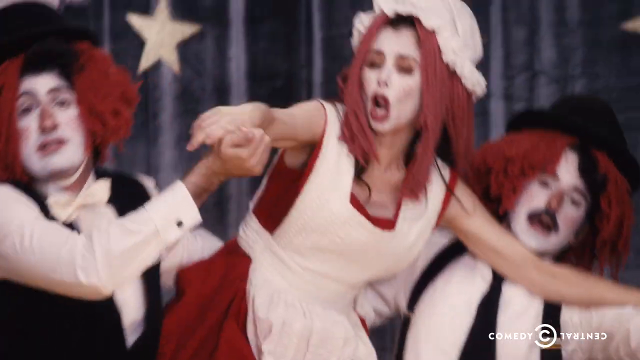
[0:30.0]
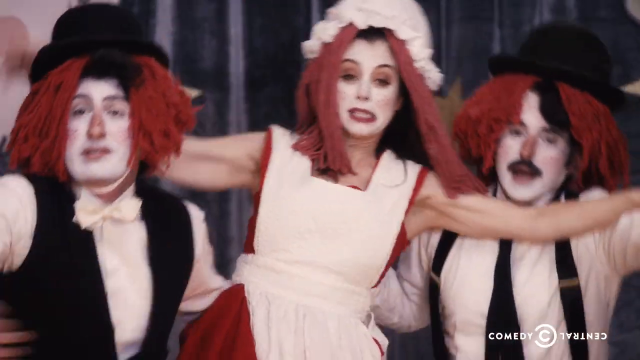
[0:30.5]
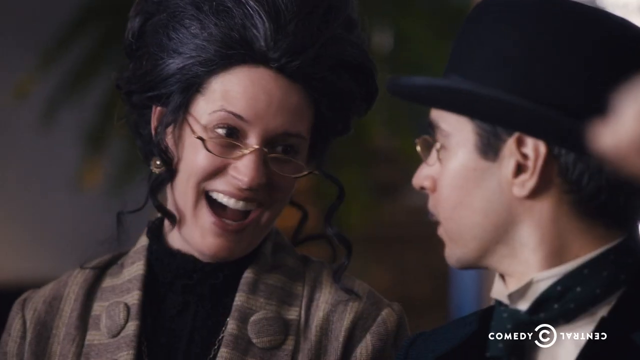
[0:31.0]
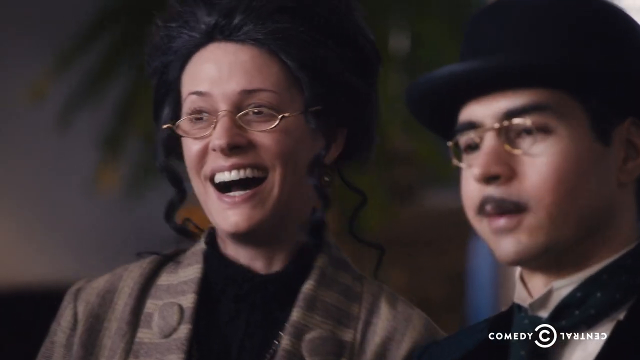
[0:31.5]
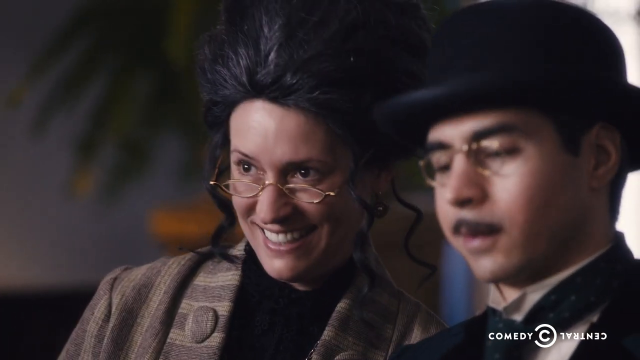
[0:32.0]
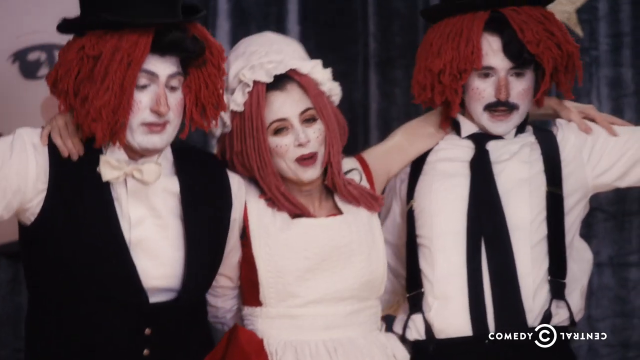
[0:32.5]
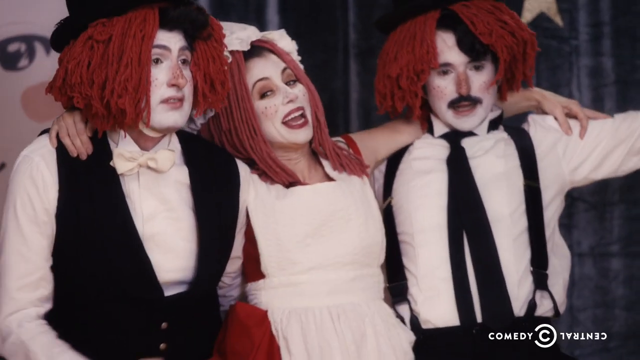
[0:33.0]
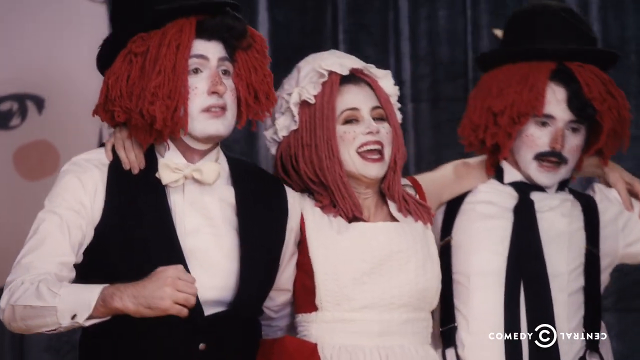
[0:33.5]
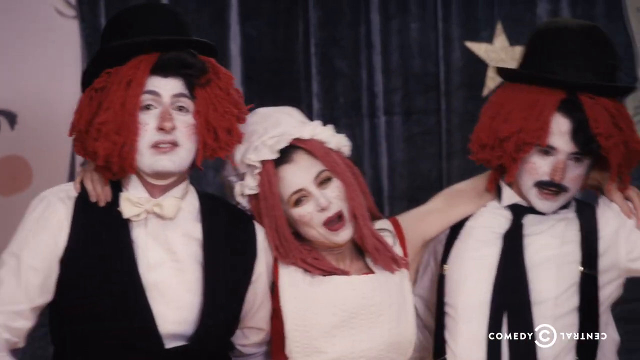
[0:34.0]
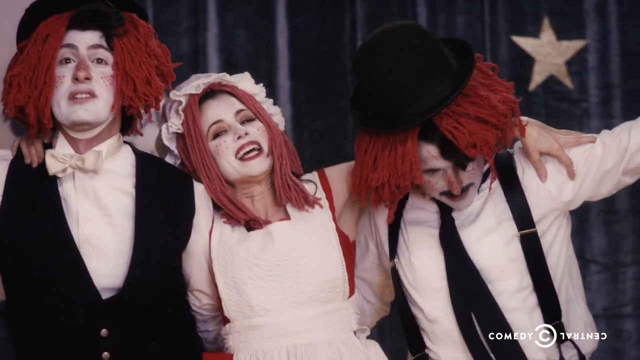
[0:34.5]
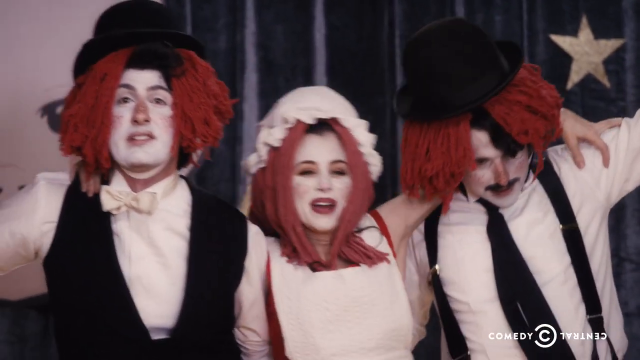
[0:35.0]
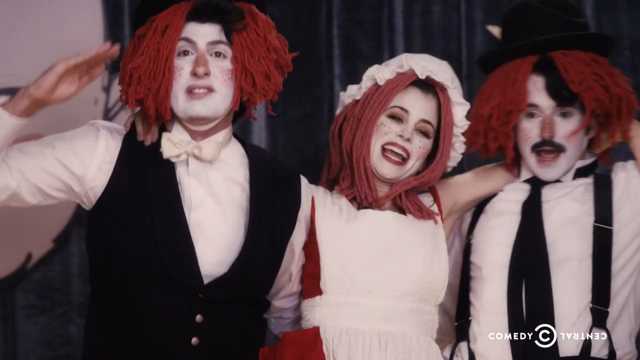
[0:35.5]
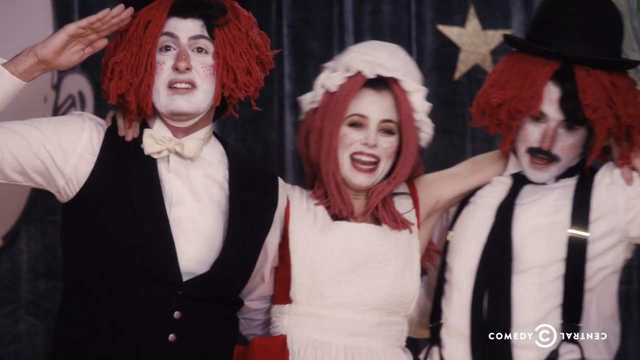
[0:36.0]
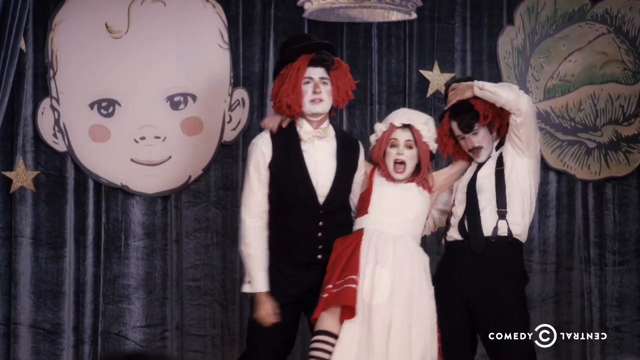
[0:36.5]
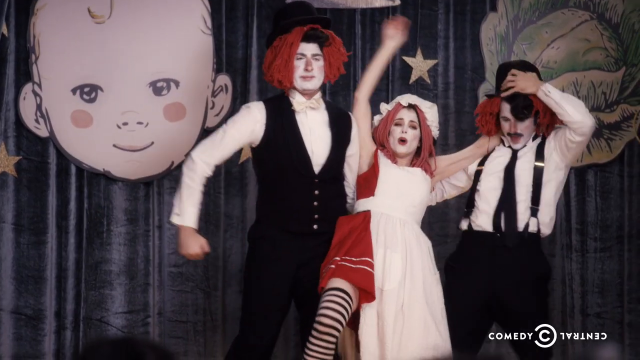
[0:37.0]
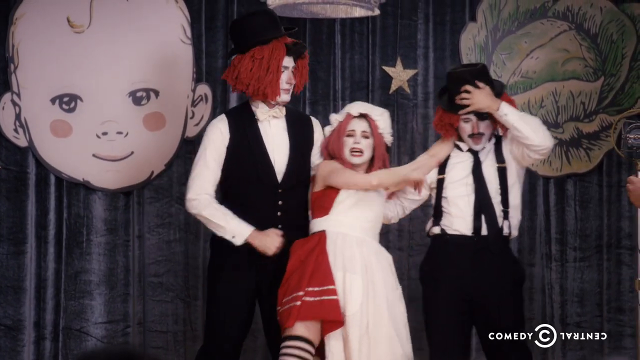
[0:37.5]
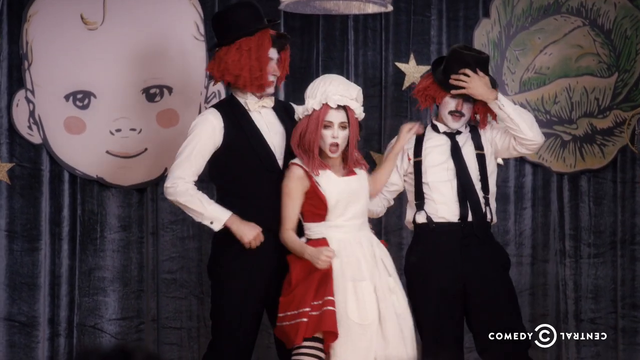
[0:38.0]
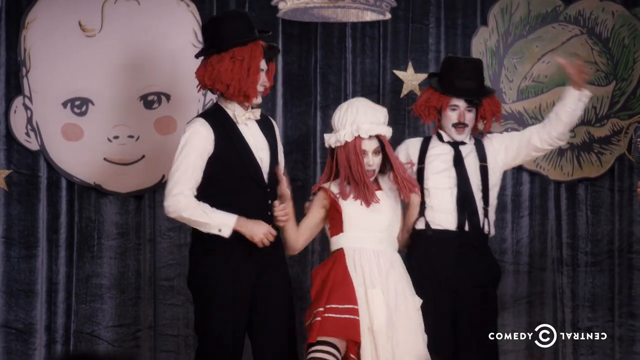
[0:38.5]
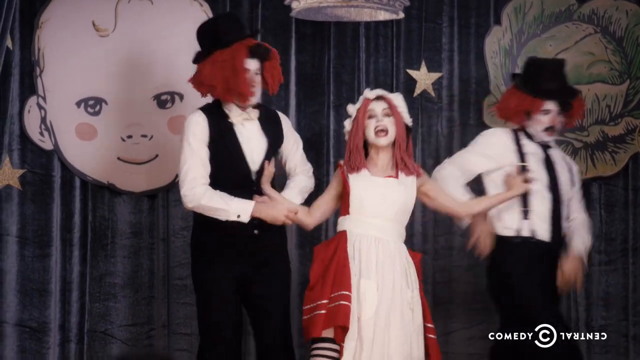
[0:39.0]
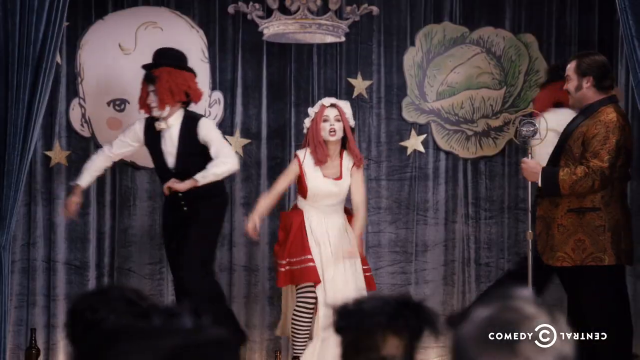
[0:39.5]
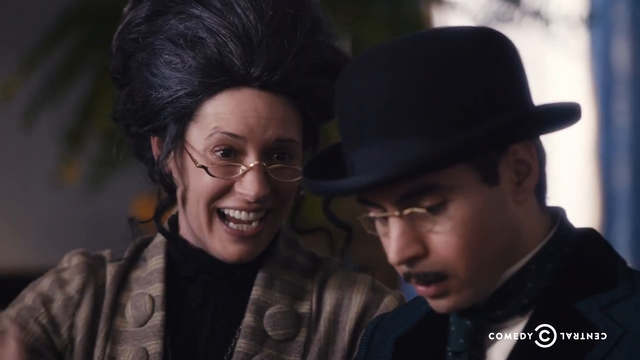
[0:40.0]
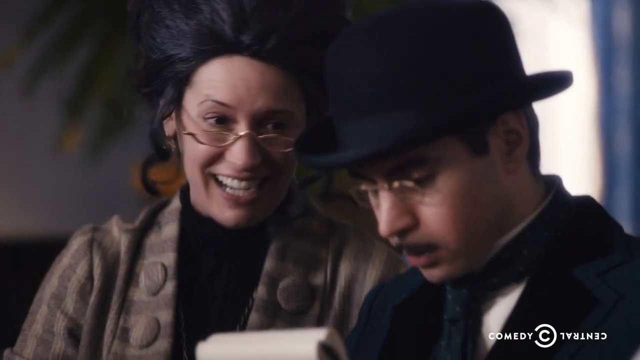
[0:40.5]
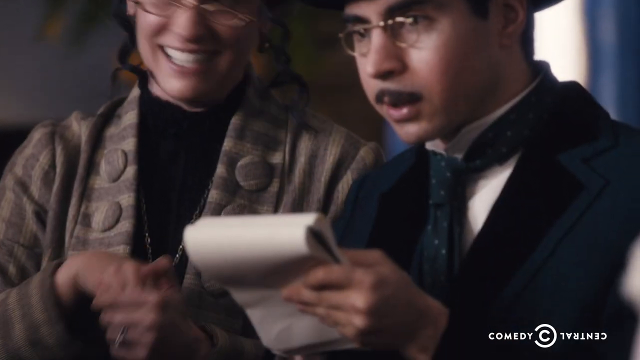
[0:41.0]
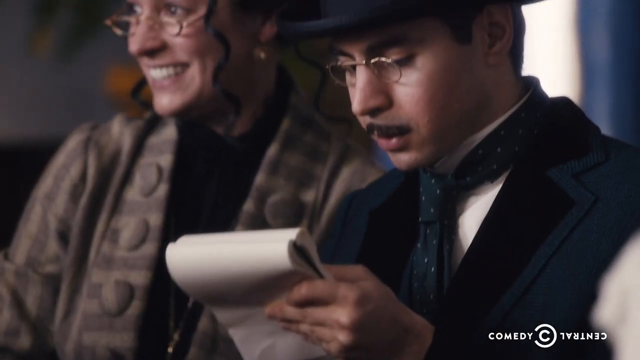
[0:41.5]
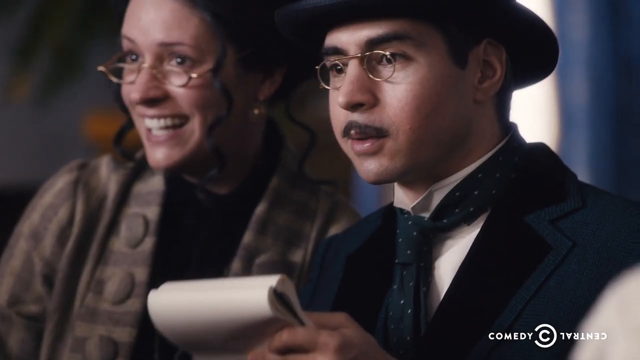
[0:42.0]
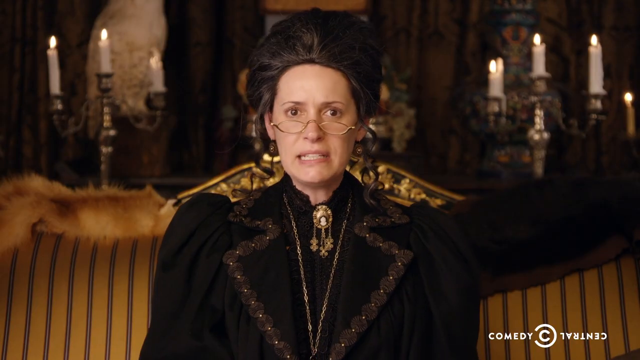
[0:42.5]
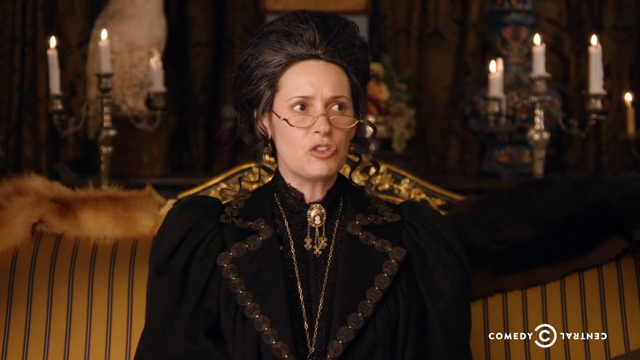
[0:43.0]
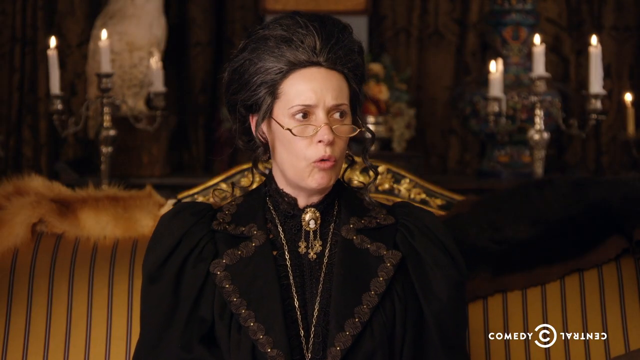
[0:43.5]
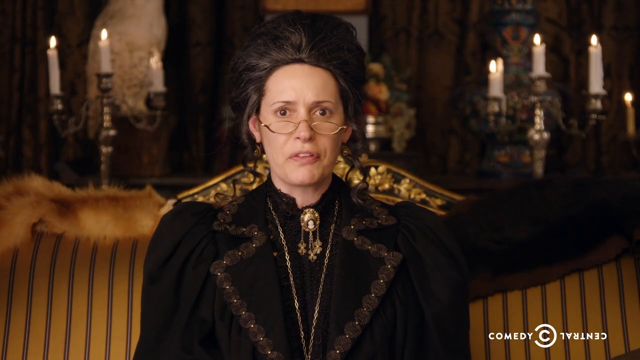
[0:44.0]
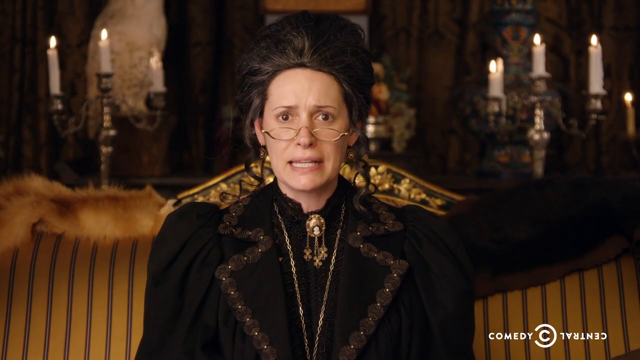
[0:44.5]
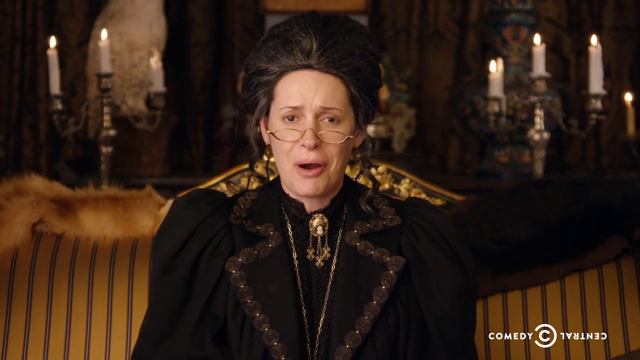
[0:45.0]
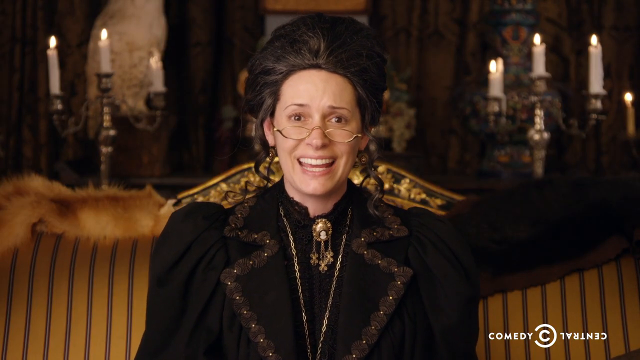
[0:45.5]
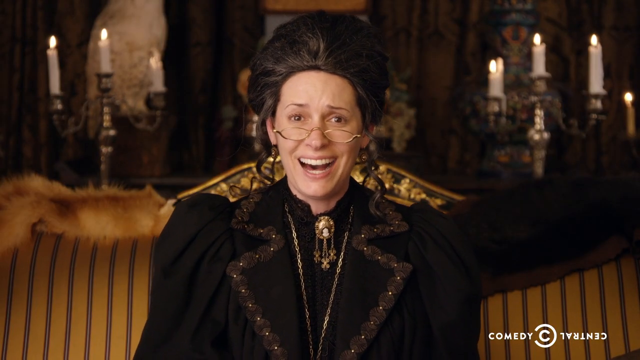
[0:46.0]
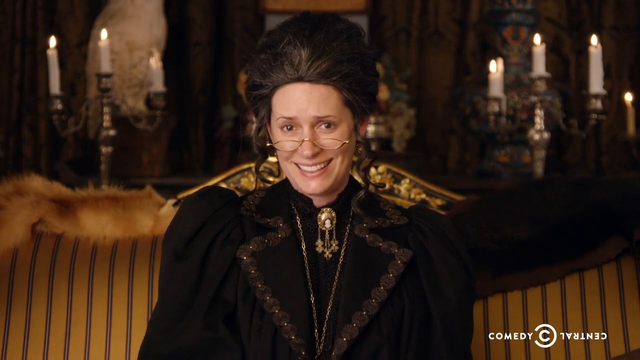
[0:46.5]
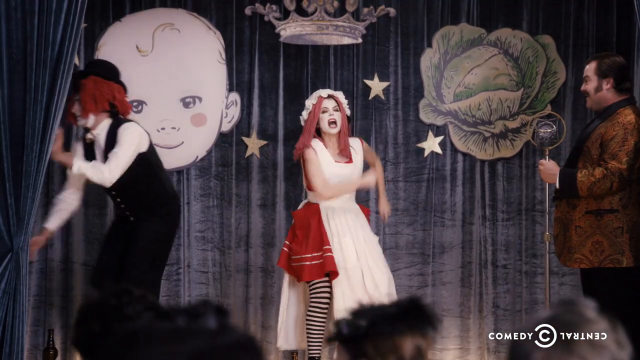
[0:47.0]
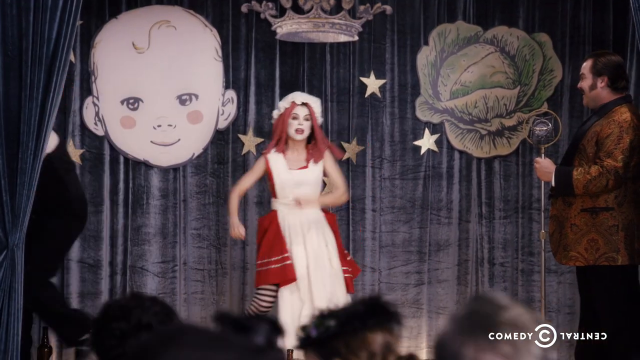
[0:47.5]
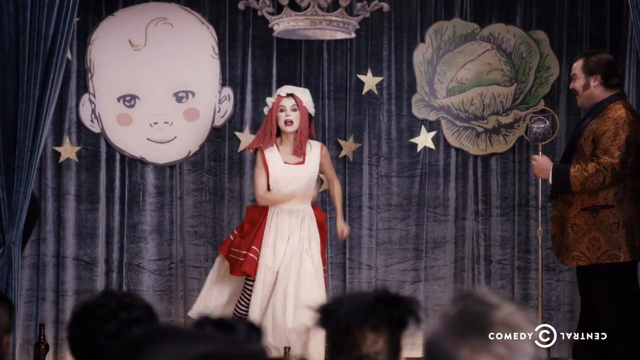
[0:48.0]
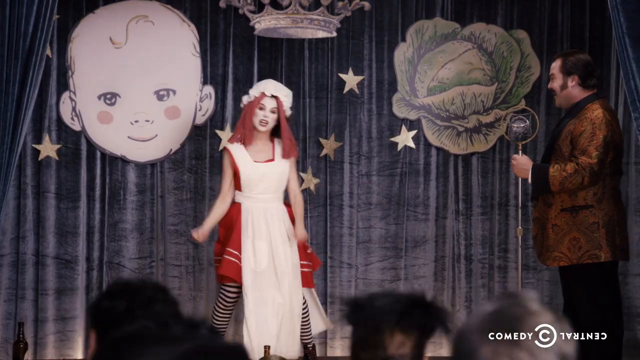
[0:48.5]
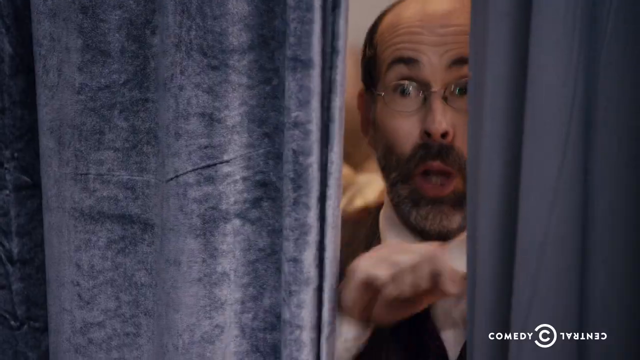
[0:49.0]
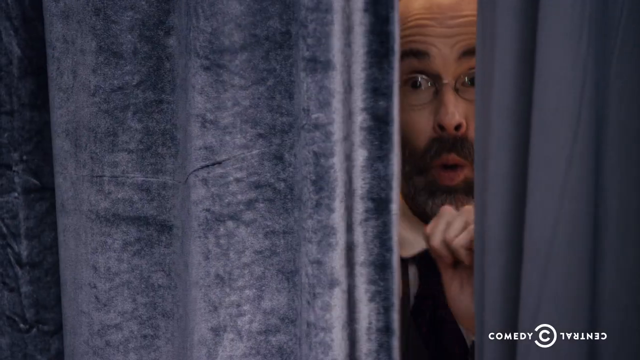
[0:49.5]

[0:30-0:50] The Comedy Central show continues with the three men and the one woman, still in what appears to be Victorian-era dress. They seem to be singing together while keeping up a comedy show through their performance. It is unclear whether the show is a full comedy program in itself or a trailer of some sort for another program on Comedy Central.